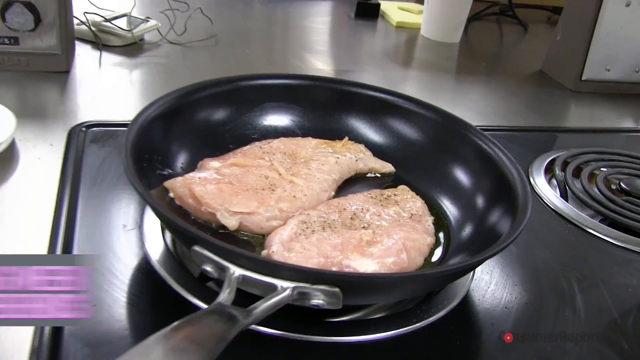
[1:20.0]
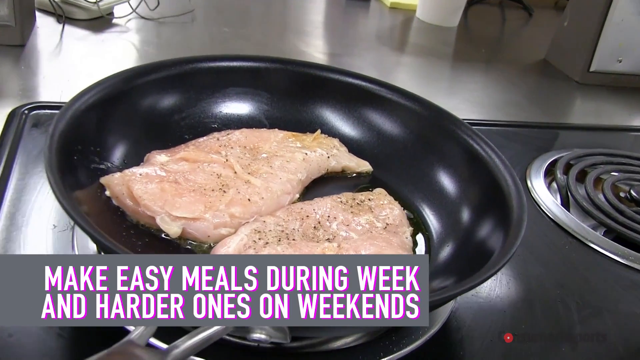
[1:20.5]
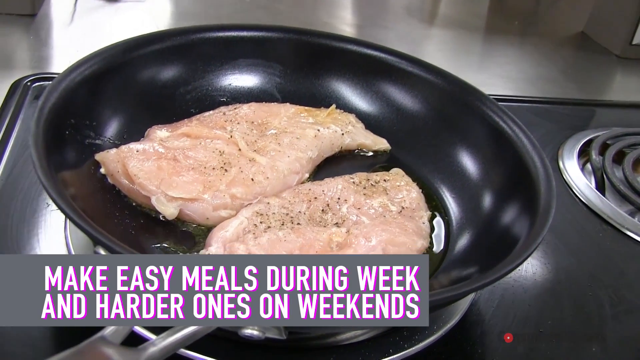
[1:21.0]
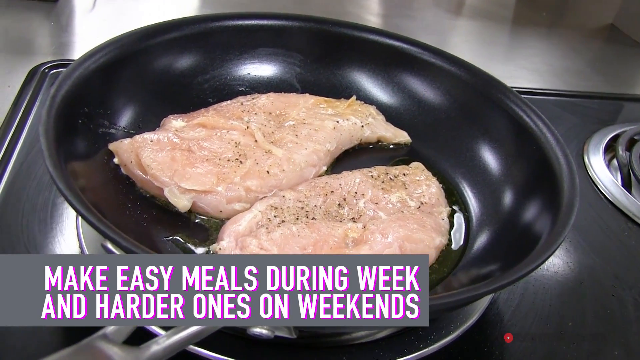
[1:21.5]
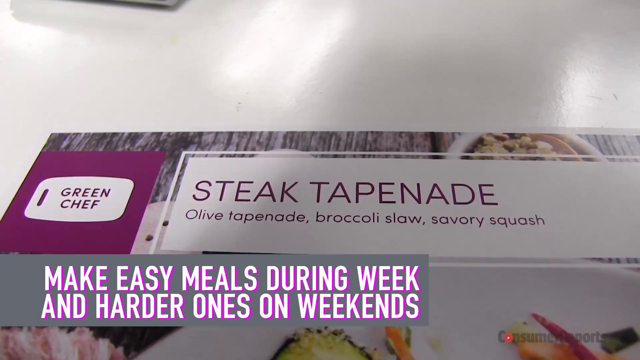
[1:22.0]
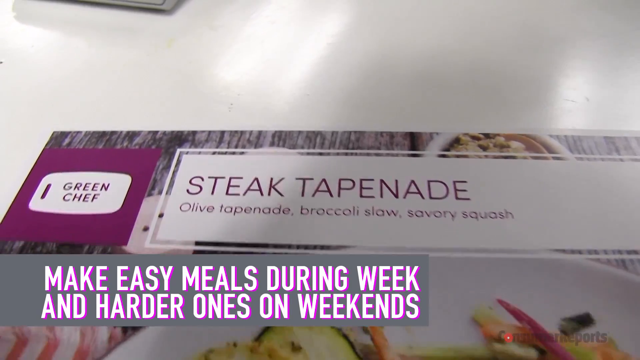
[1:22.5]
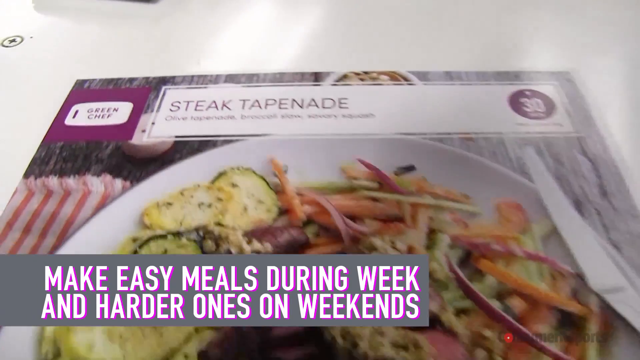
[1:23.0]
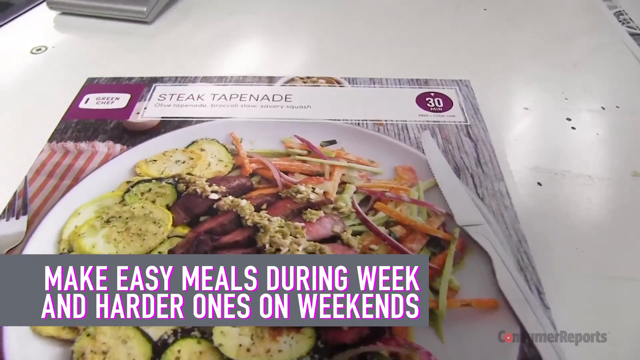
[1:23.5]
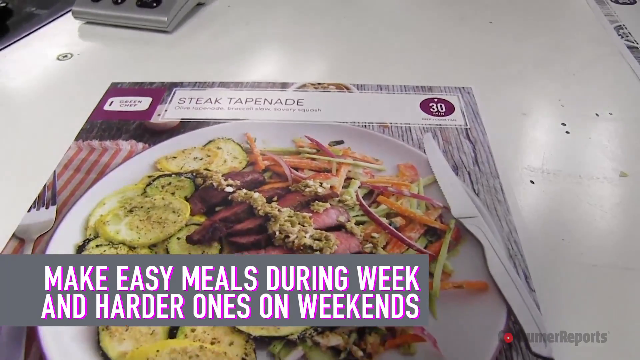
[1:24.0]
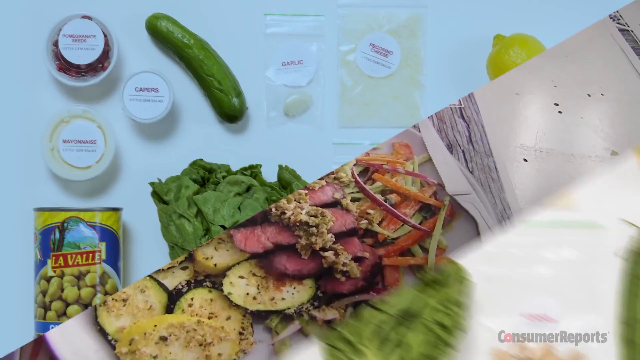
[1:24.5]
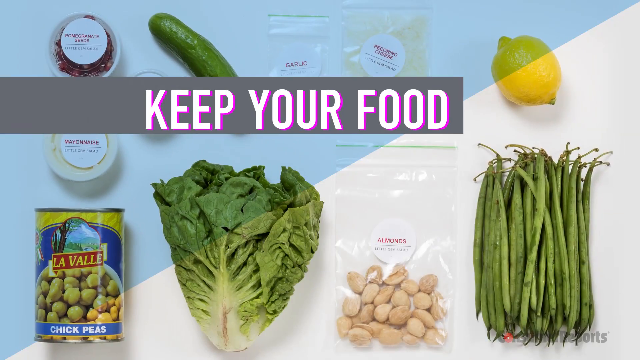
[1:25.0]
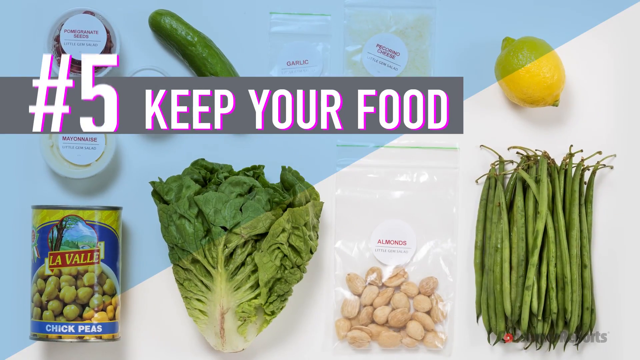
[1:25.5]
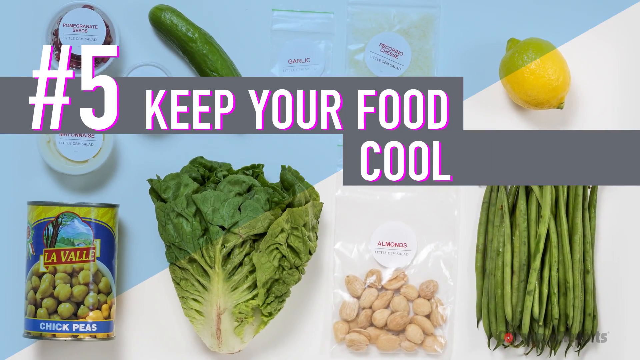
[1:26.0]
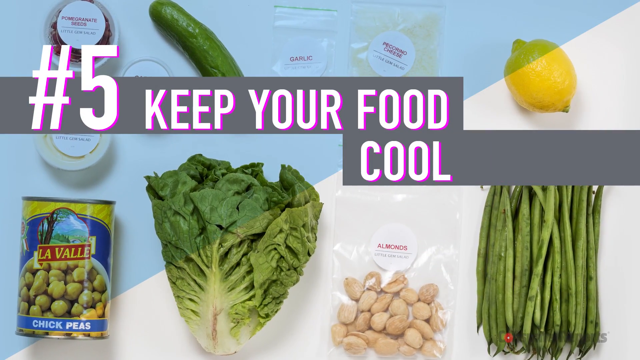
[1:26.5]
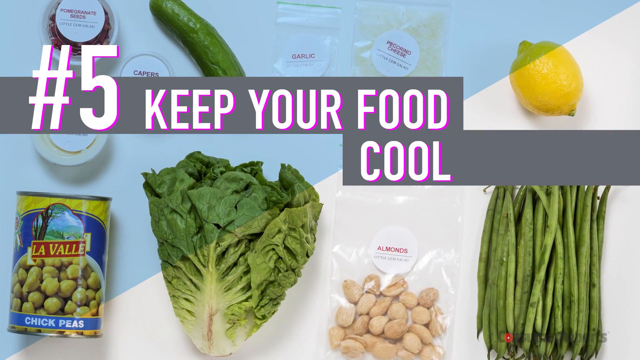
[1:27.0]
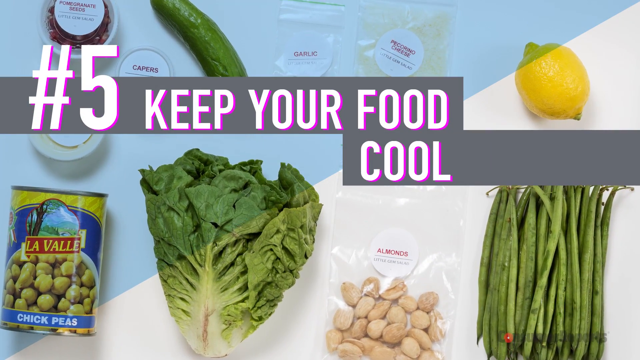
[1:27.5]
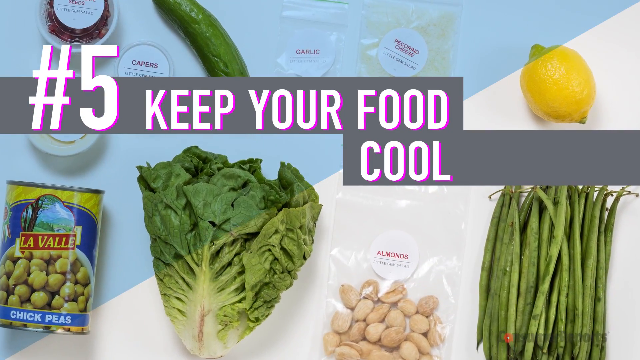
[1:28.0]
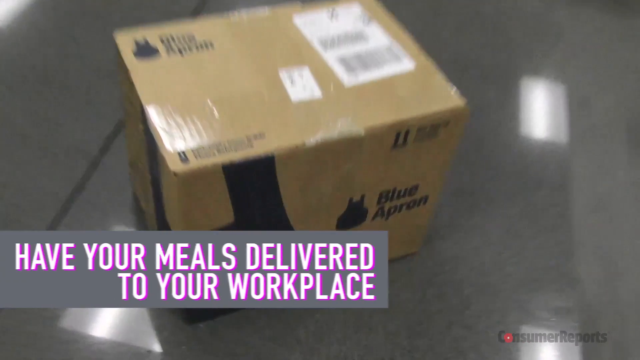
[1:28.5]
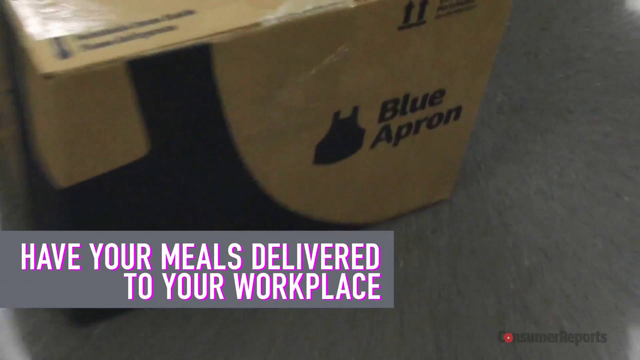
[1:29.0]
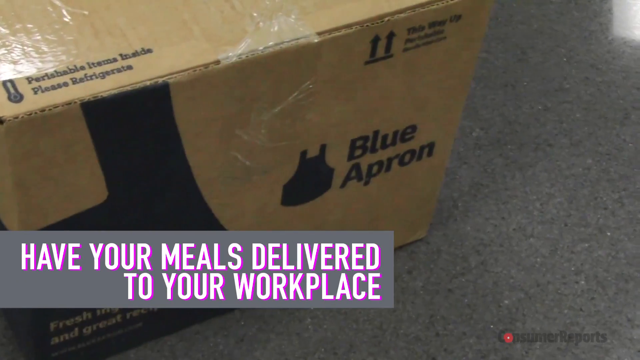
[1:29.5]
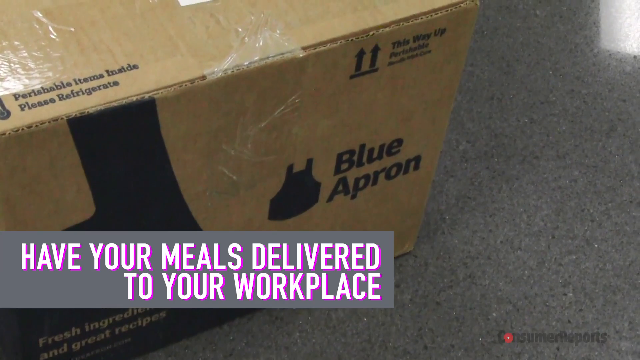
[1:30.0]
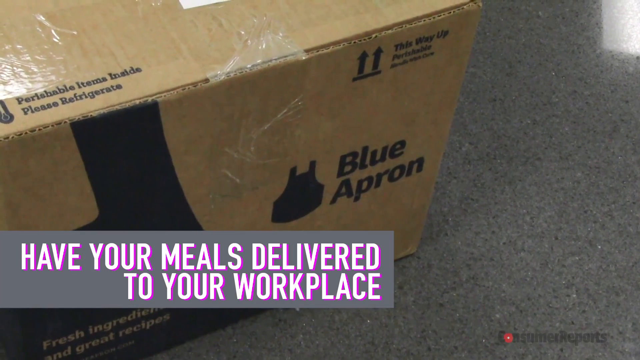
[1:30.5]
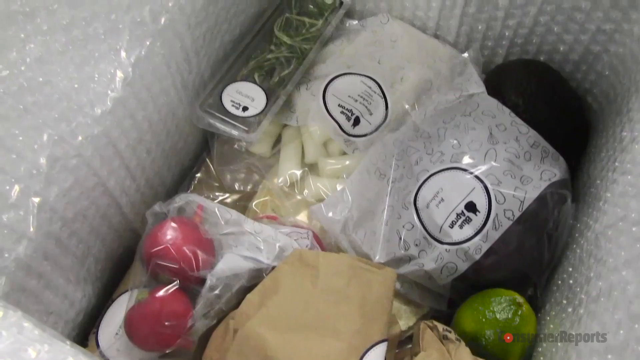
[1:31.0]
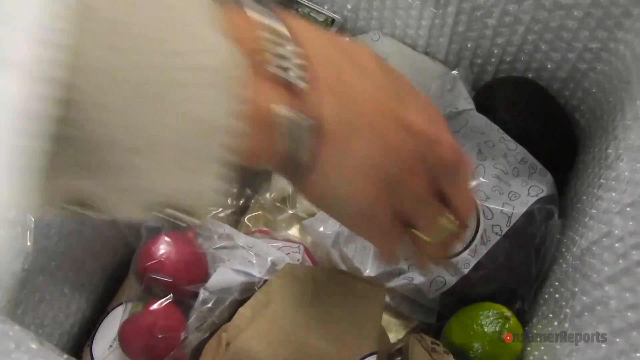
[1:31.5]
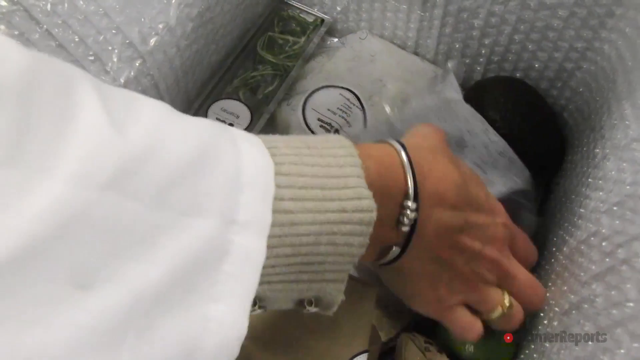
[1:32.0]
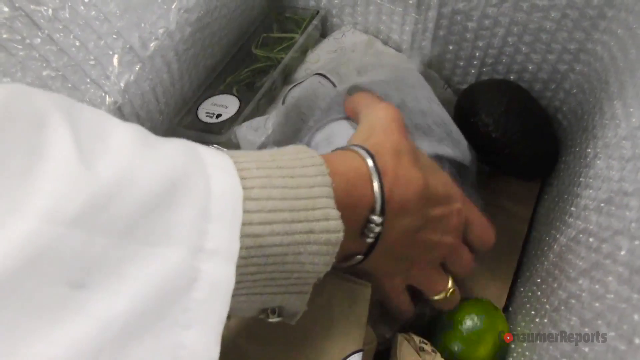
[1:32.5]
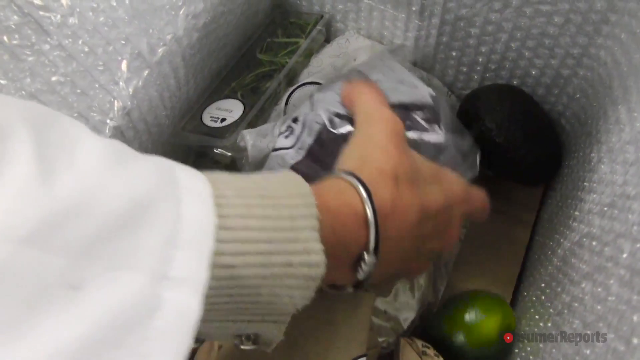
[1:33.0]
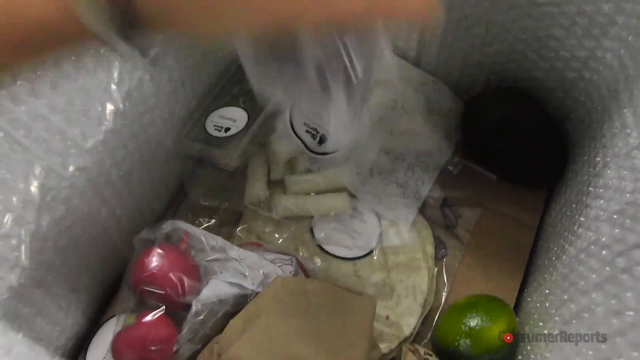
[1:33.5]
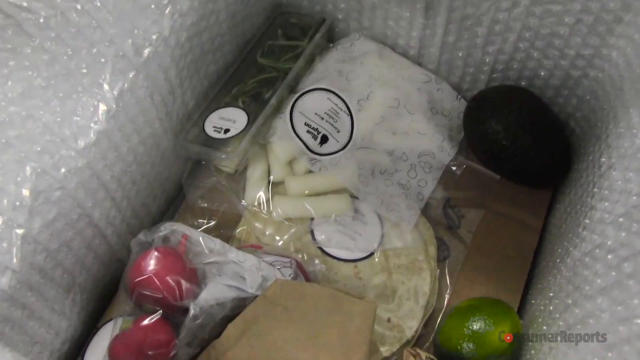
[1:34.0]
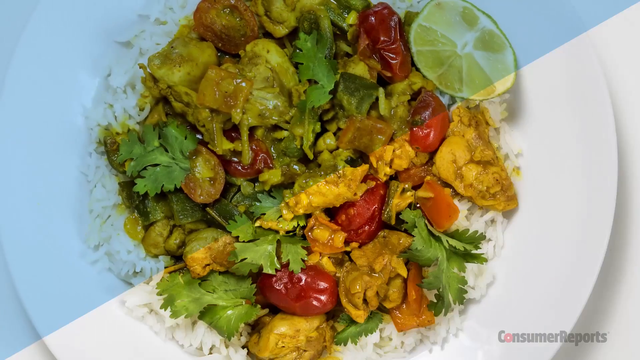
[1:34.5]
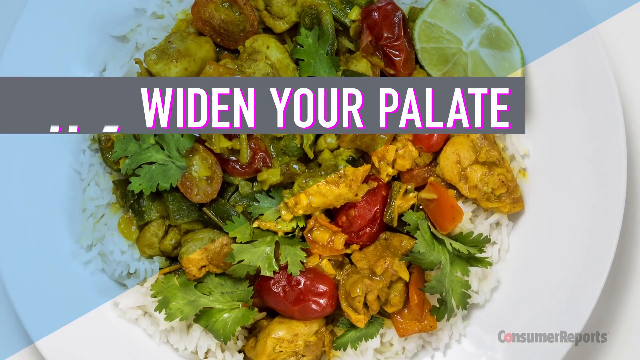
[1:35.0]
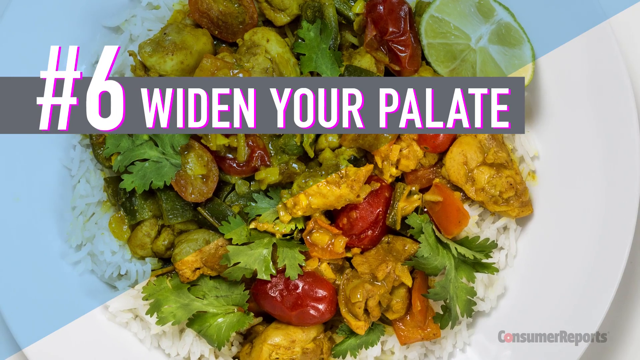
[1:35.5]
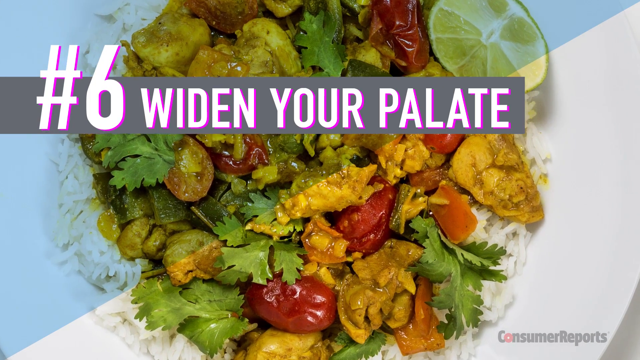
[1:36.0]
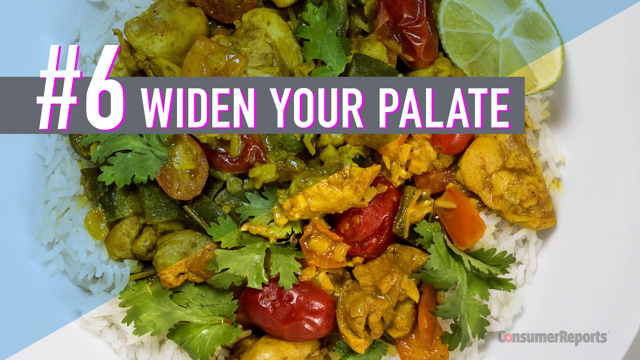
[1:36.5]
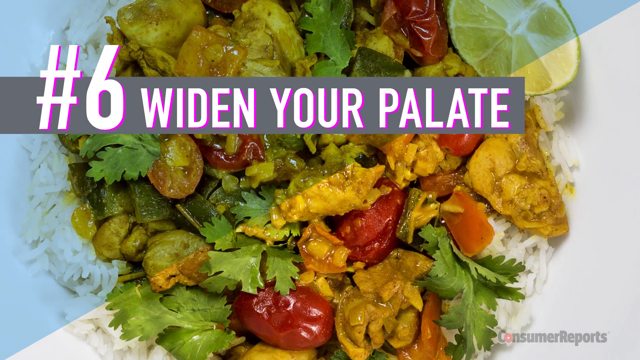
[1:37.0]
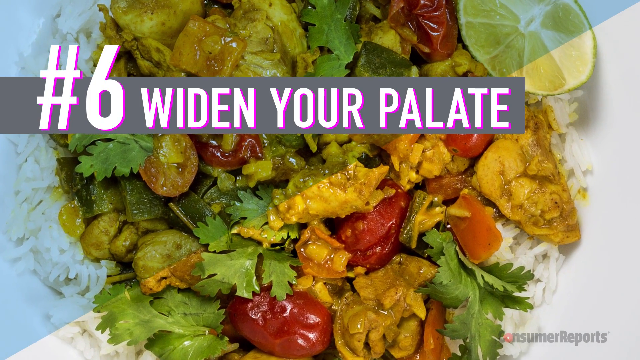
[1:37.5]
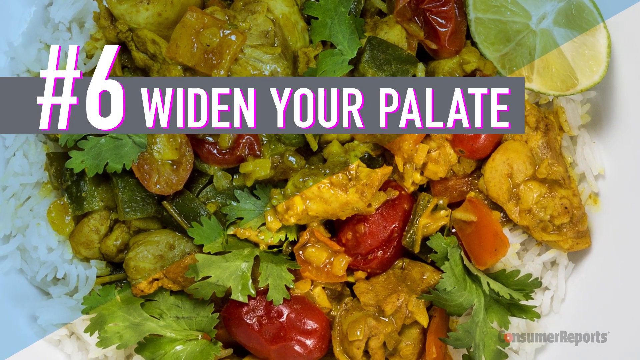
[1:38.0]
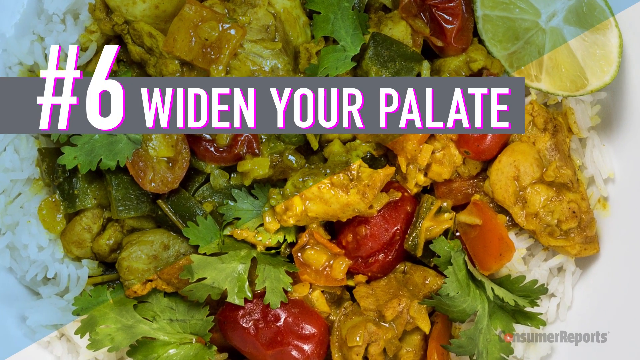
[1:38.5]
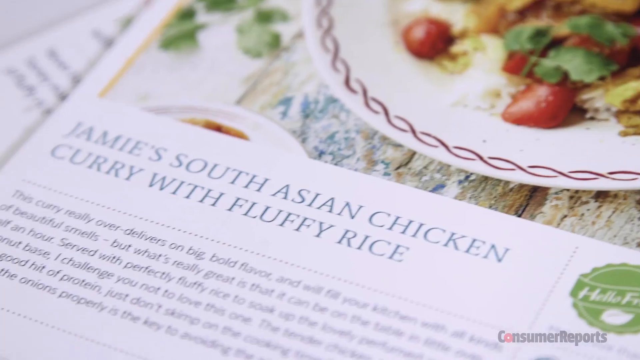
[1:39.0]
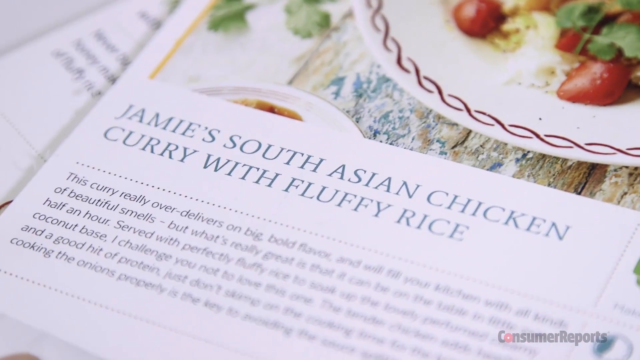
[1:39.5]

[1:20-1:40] A black frying pan is on an eye of a stovetop, holding two filleted pieces of chicken that look like chicken breast. In the bottom left-hand corner, white letters on a purple background, with gray behind, read "make easy meals during week and harder ones on the weekends". Steak and tapenade are shown next, then text reading "number five, keep your food cool" with lettuce, onions, lemons, cucumbers, garlic, almonds and other items. Finally, text reads "have your meals delivered to your workplace".